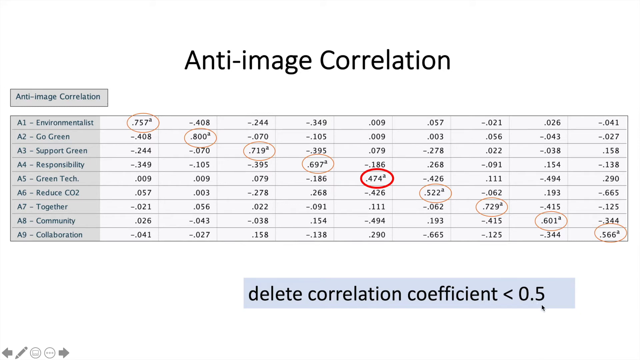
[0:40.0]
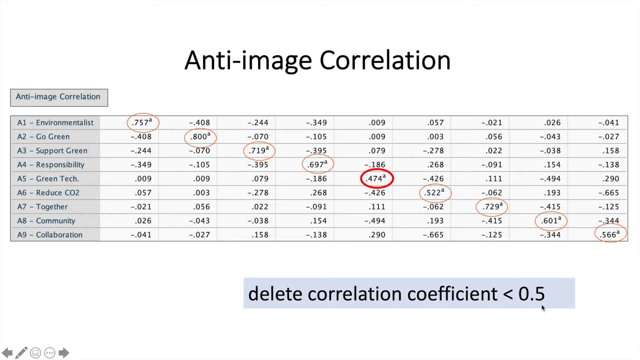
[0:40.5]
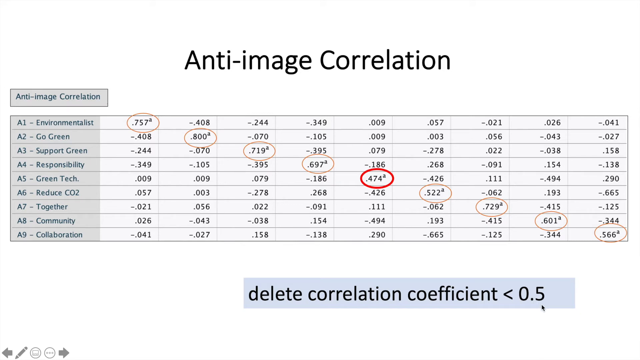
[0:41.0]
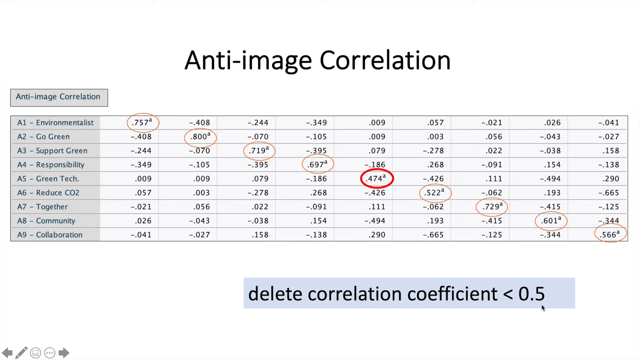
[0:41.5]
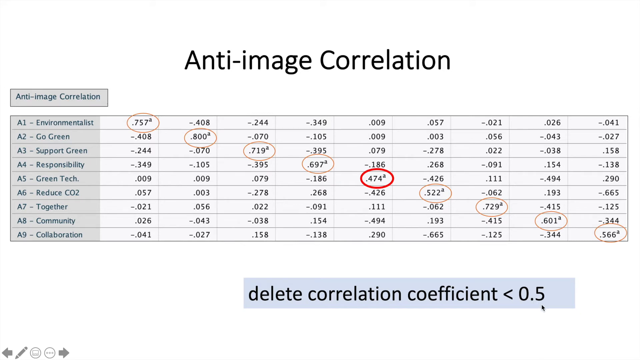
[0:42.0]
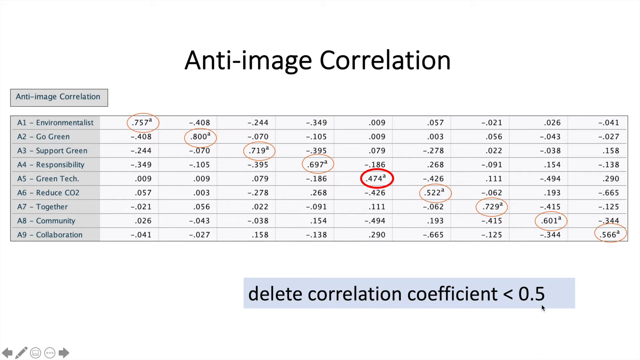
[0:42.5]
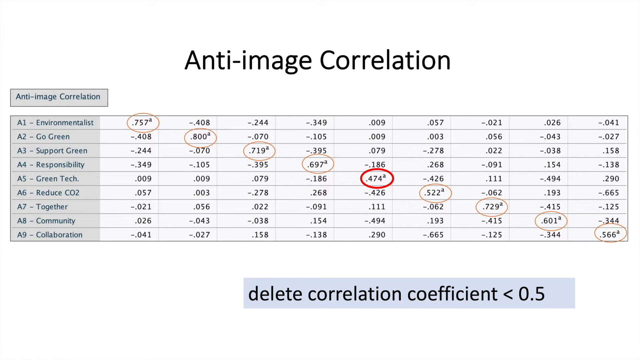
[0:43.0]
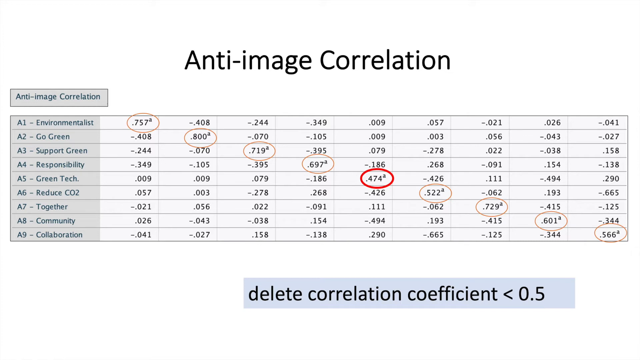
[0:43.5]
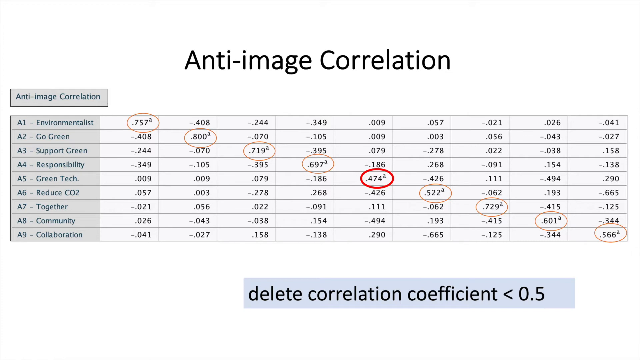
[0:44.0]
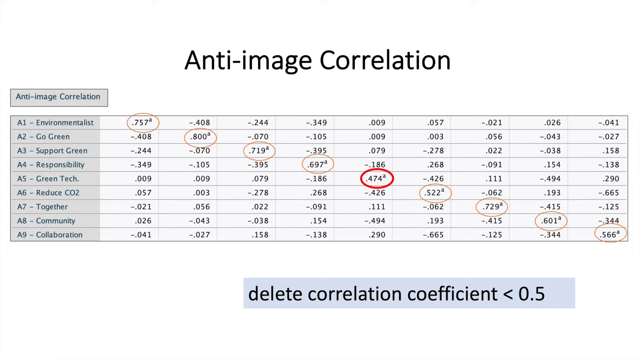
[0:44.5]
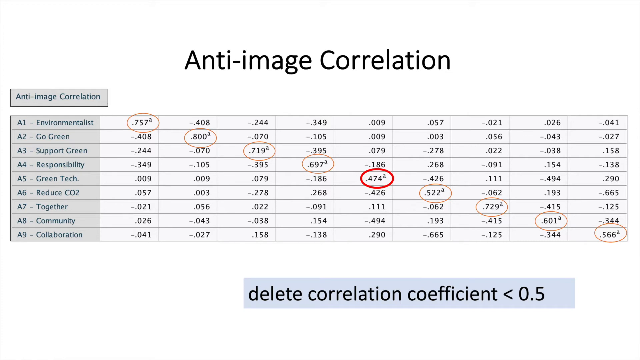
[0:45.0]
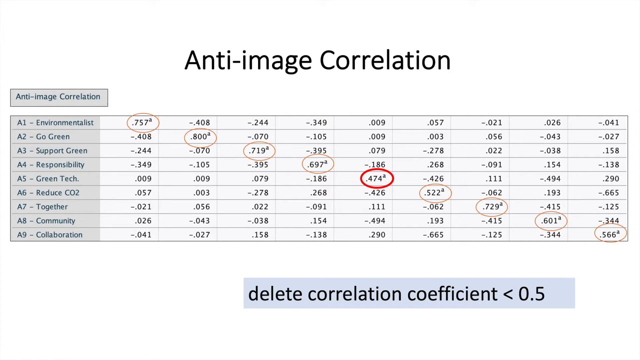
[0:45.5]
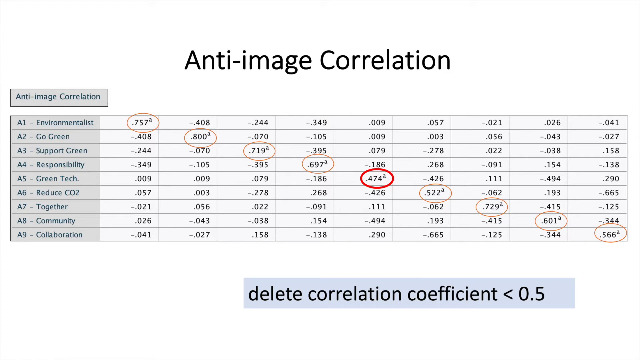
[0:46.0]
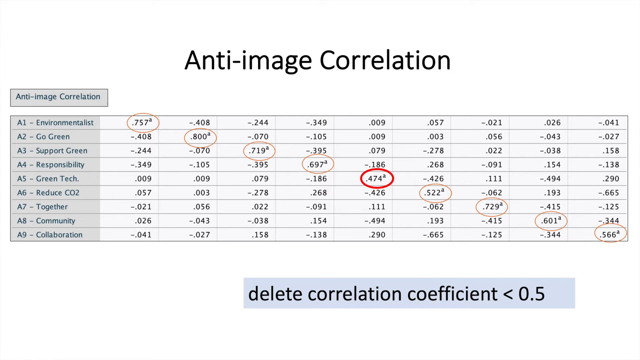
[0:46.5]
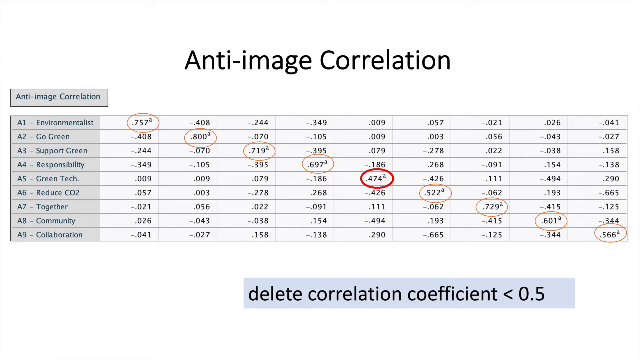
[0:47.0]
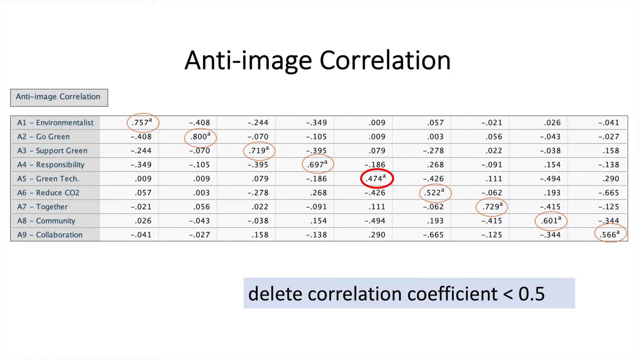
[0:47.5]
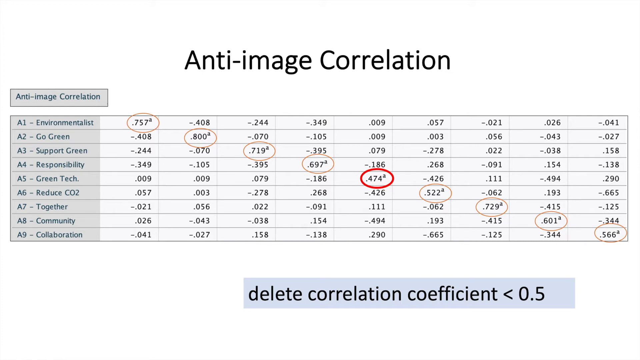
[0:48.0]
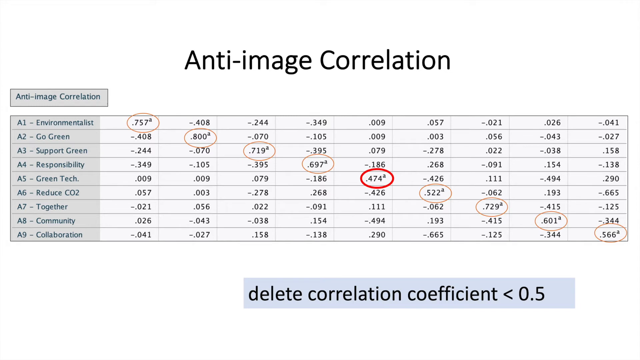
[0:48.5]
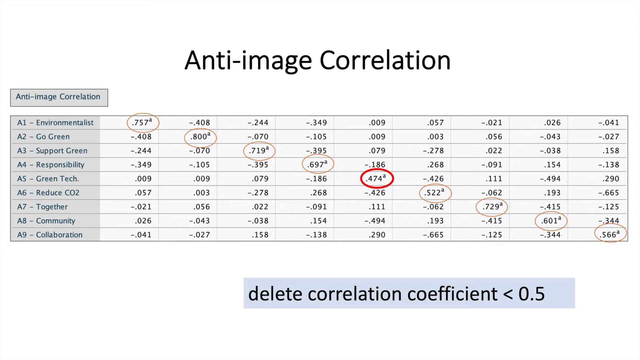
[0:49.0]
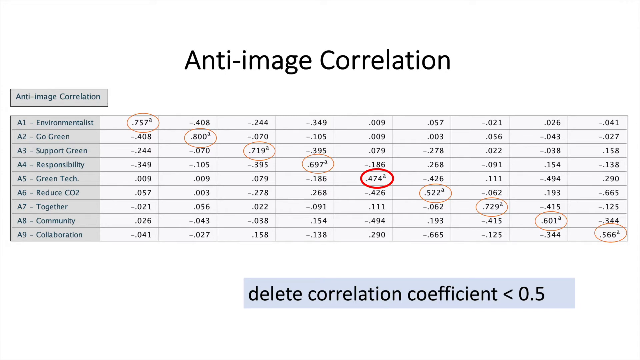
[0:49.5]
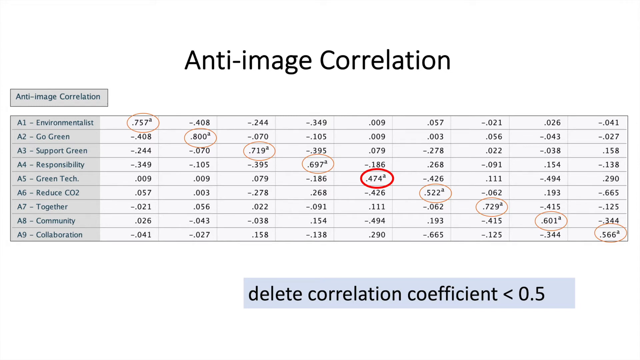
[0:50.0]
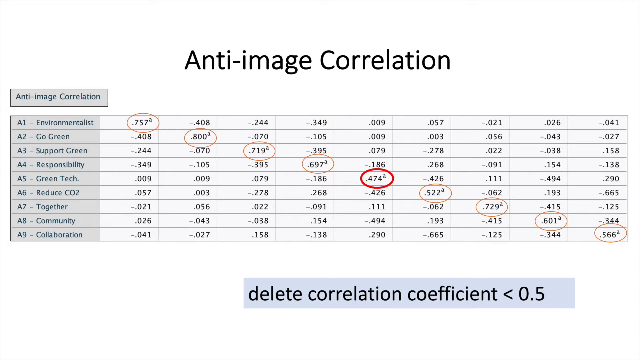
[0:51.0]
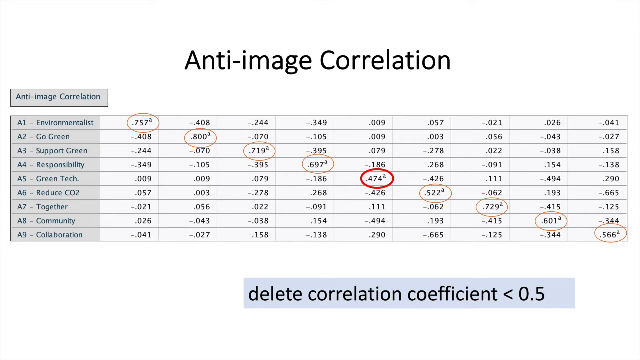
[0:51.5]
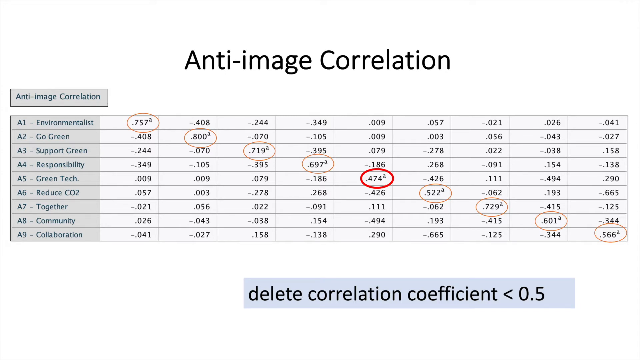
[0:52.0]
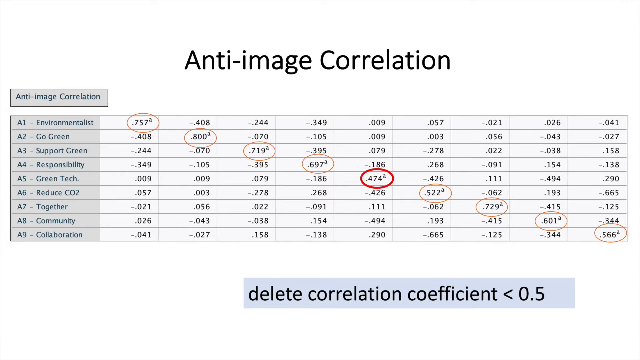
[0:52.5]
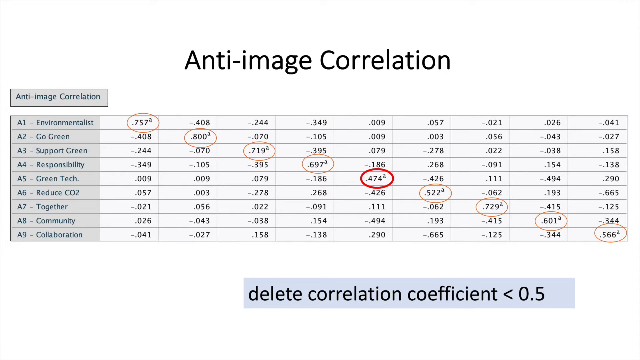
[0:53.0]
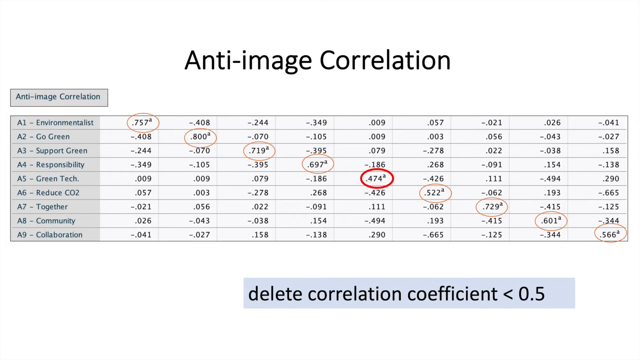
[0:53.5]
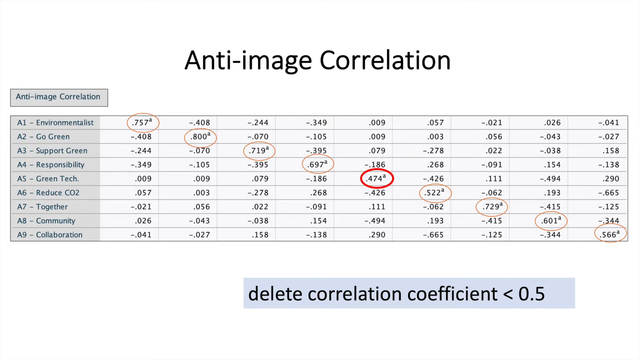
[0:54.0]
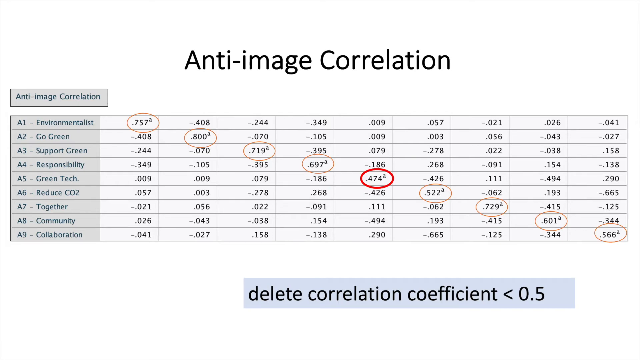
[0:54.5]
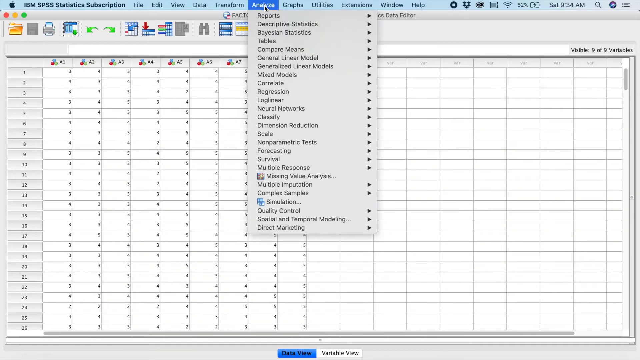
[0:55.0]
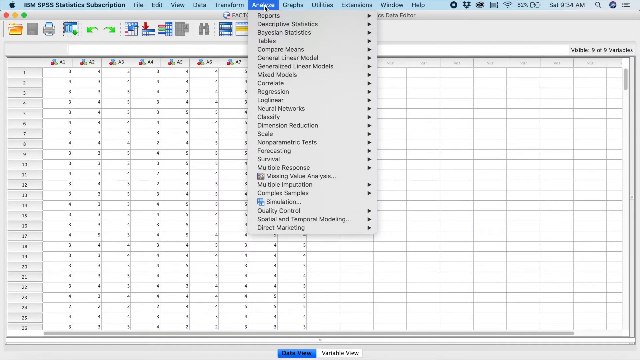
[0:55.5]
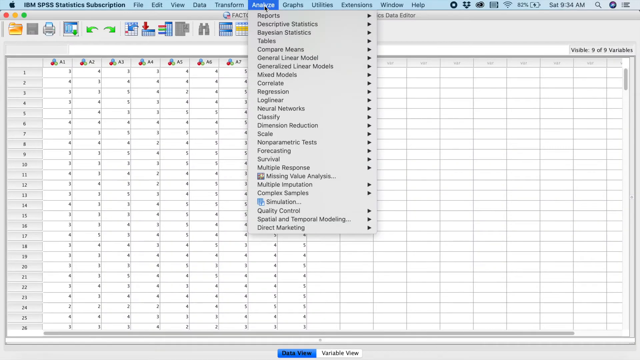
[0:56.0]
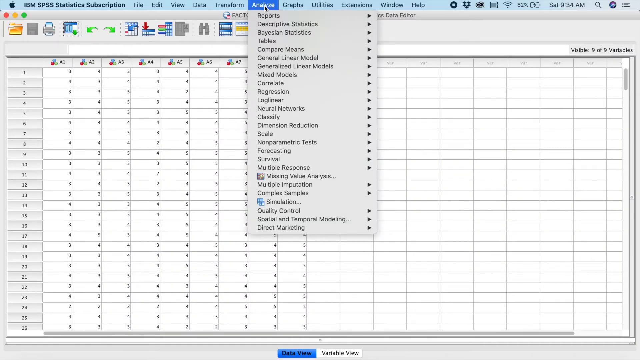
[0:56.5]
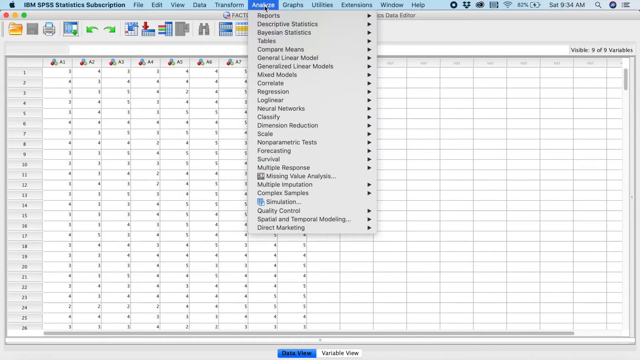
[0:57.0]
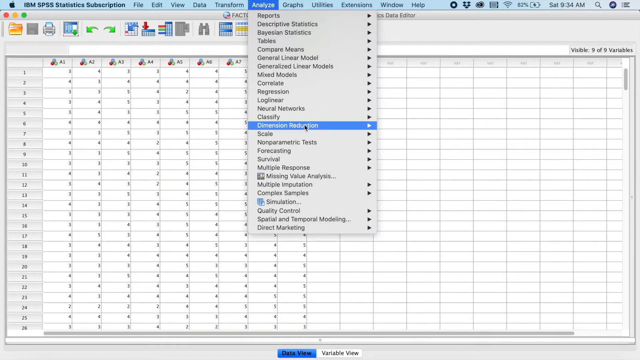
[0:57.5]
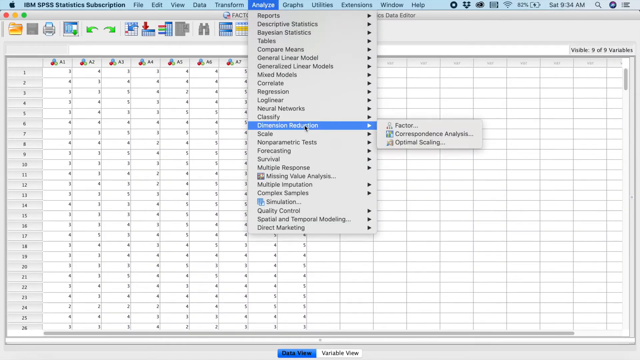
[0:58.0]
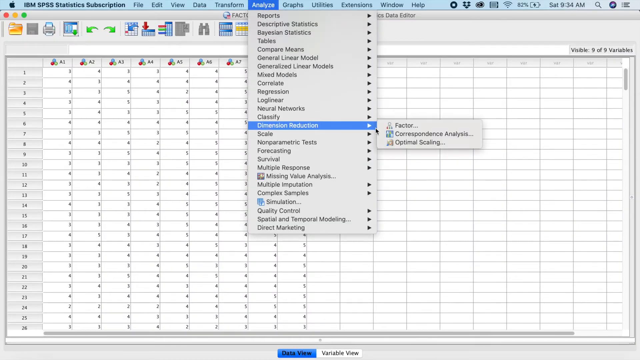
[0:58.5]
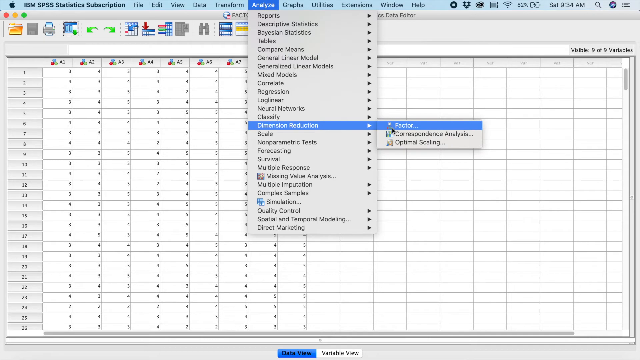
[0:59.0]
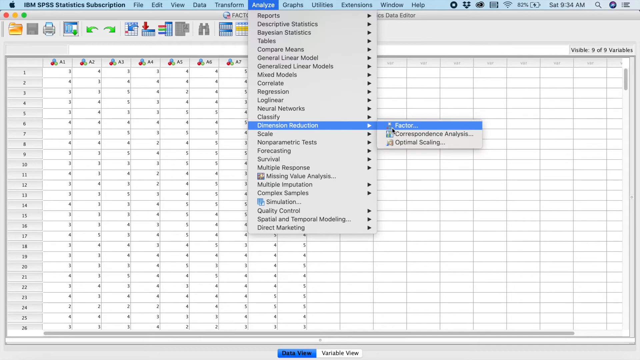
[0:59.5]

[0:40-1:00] A slide with a white background is titled "Anti-Image Correlation". Below the title is a gray box with a black outline, reading "Anti-Image Correlation" in green. Below that is a chart whose first column is dark gray, while the rest of the columns are white. The first column lists, from top to bottom: "A1 environmentalist", "A2 go green", "A3 support green", "A4 responsibility", "A5 green tech", "A6 reduce CO2", "A7 together", "A8 community", "A9 collaboration". To the right of these words are various negative and positive decimal values. The values along the diagonal are circled in orange, and the middle value is circled in red. Below the chart, inside a blue rectangle, are the words "delete correlation coefficient less than 0.5". The scene then transitions to an Excel window.